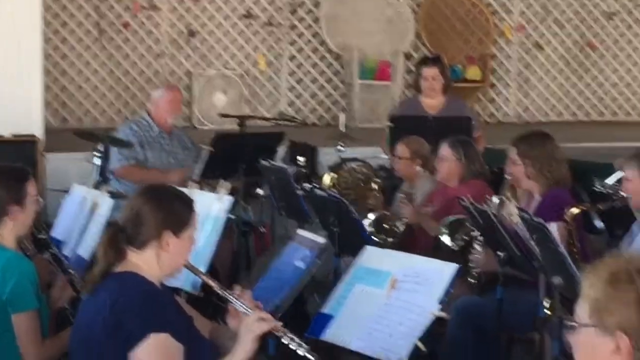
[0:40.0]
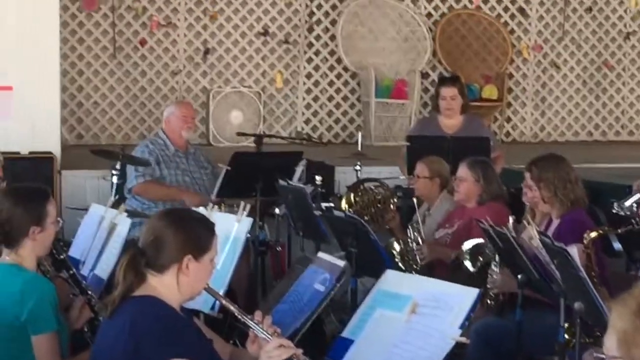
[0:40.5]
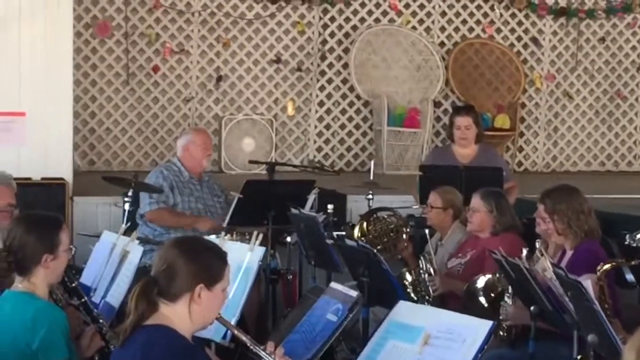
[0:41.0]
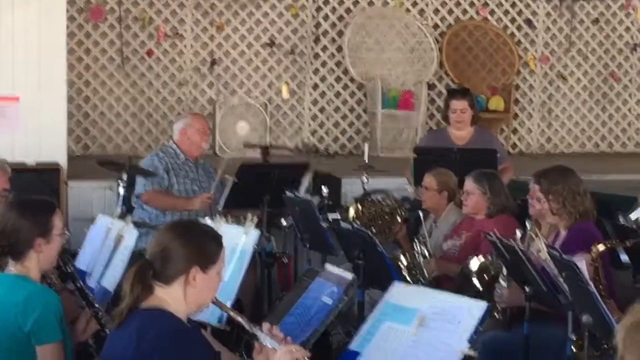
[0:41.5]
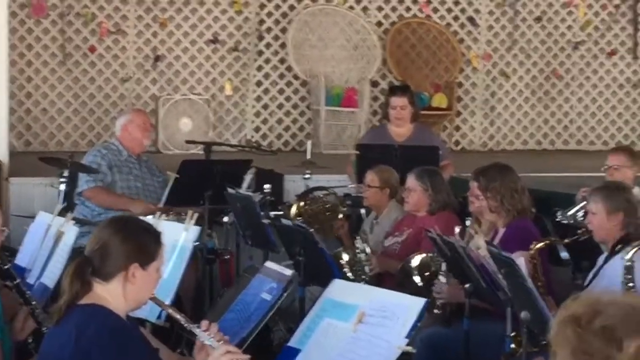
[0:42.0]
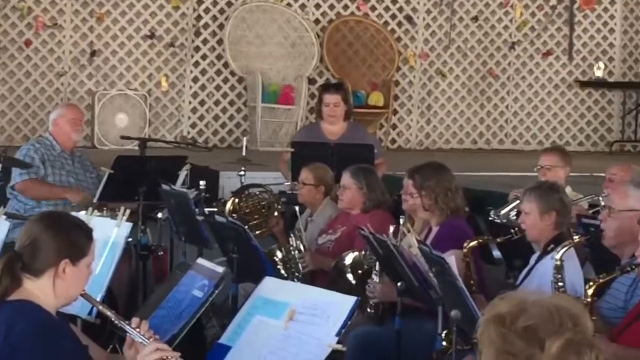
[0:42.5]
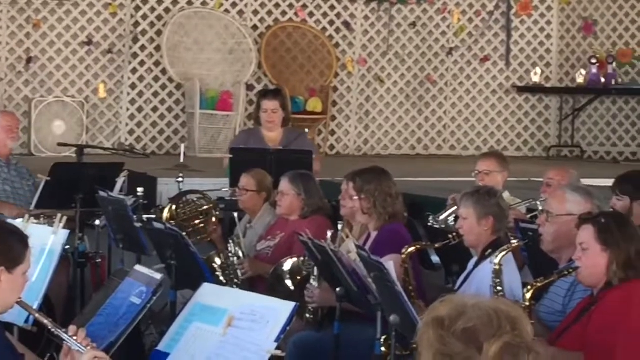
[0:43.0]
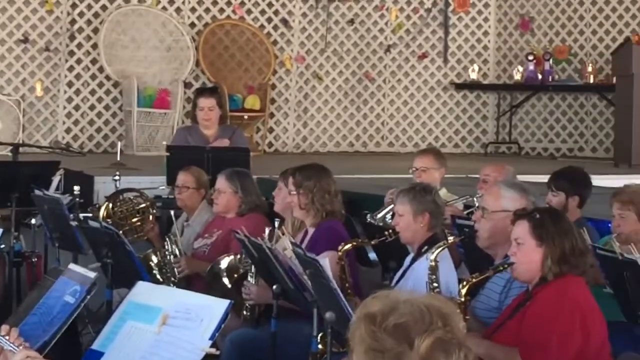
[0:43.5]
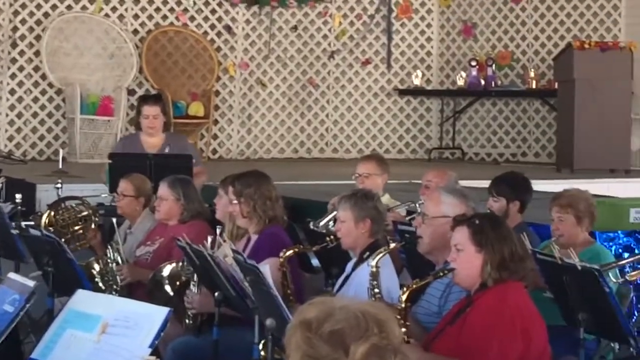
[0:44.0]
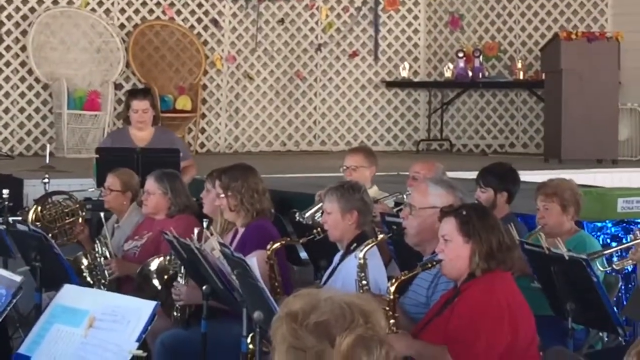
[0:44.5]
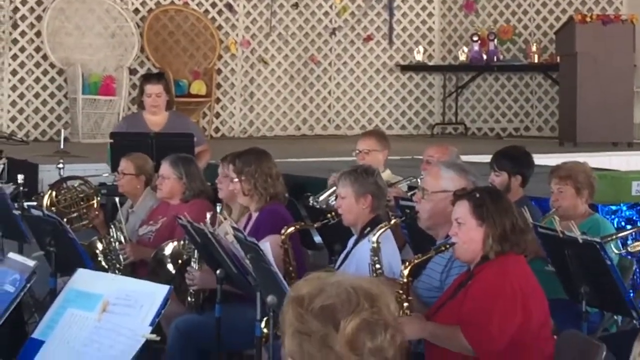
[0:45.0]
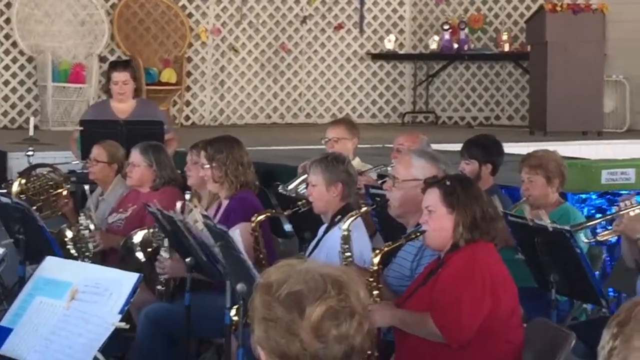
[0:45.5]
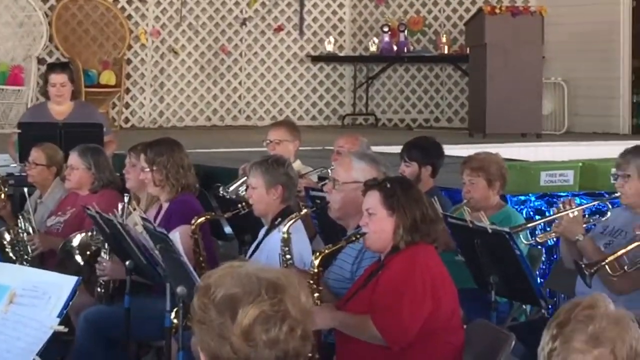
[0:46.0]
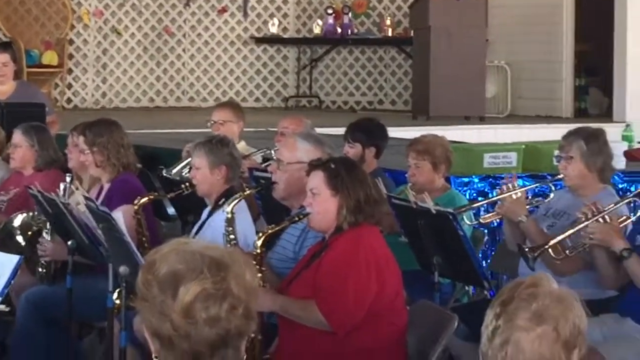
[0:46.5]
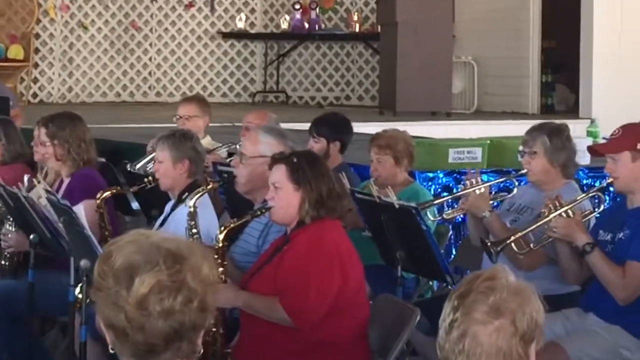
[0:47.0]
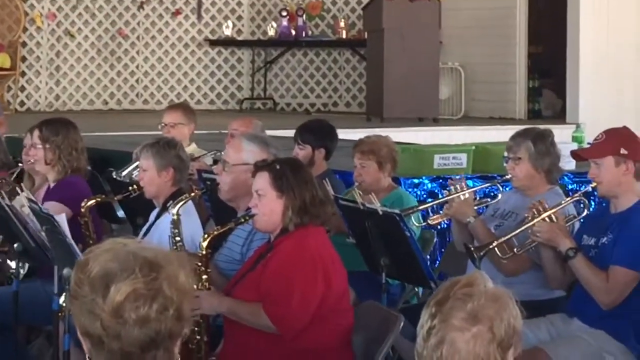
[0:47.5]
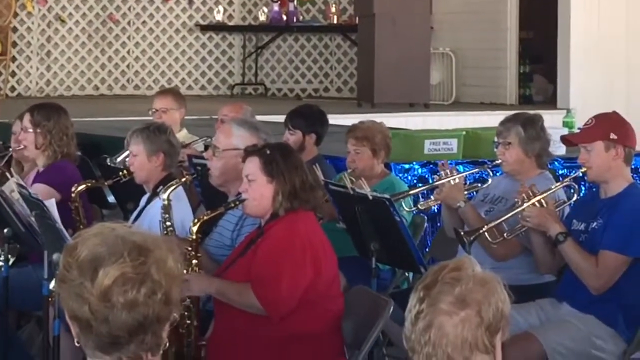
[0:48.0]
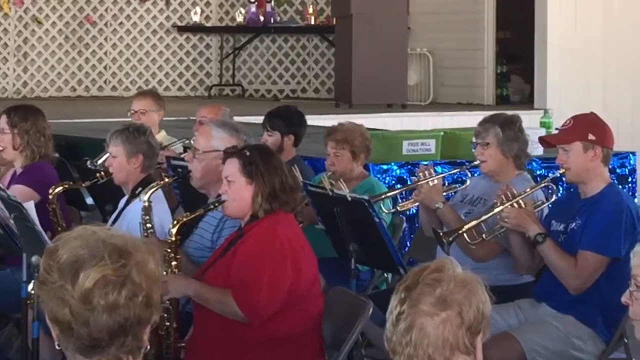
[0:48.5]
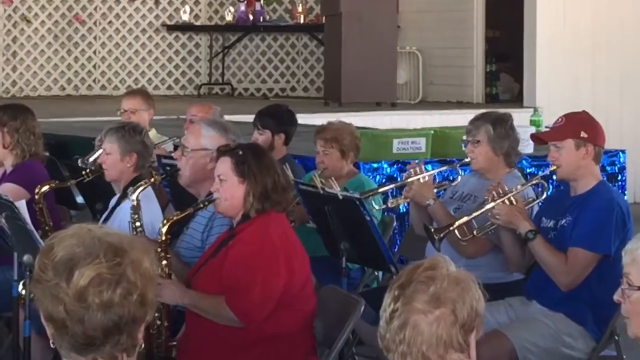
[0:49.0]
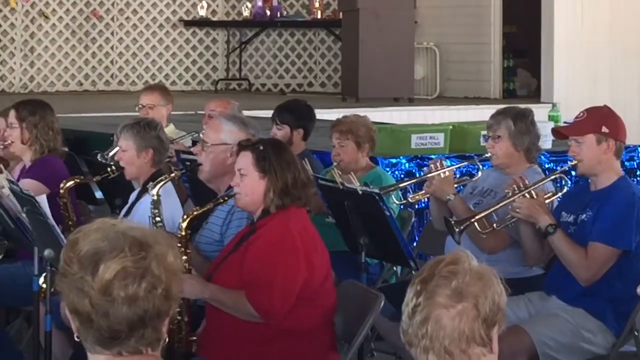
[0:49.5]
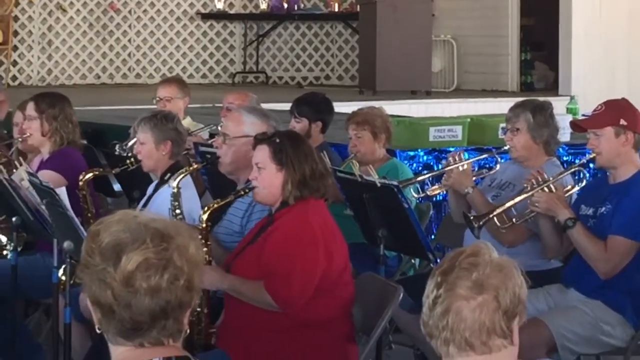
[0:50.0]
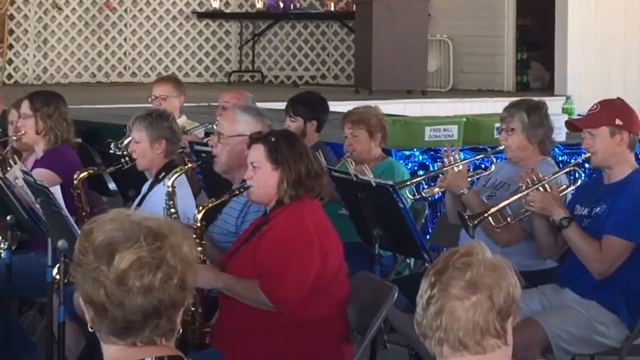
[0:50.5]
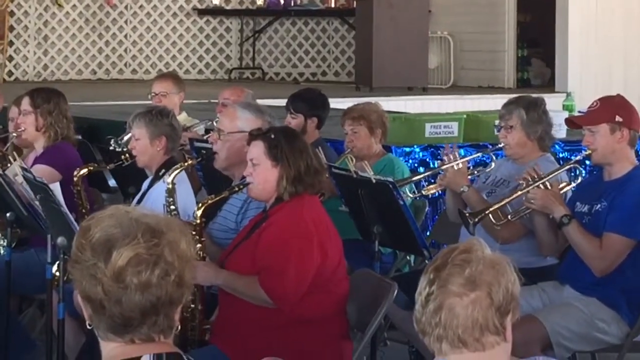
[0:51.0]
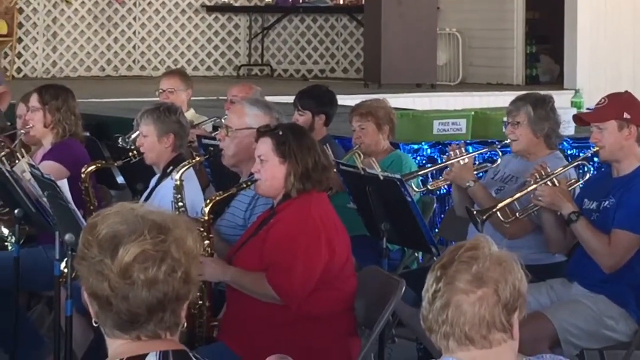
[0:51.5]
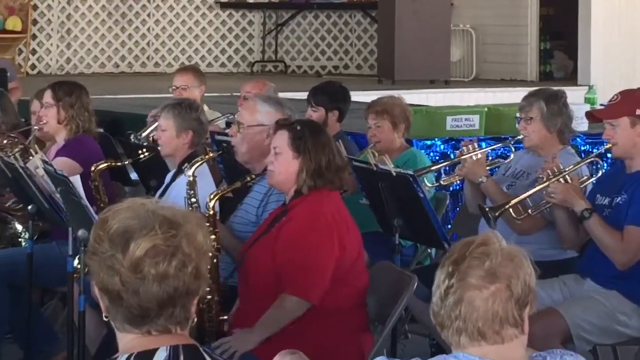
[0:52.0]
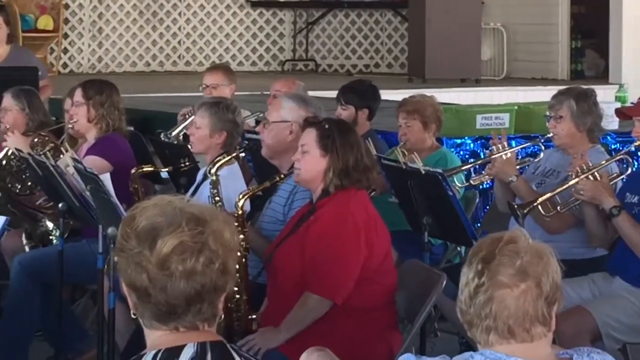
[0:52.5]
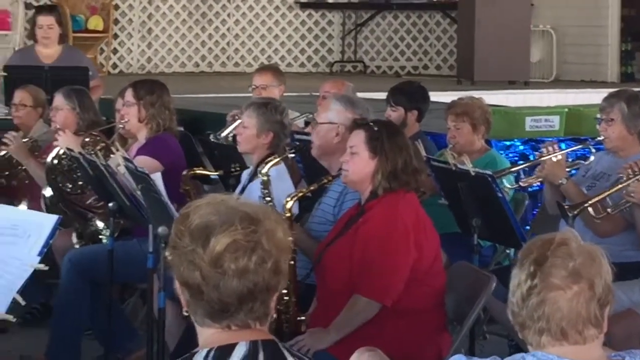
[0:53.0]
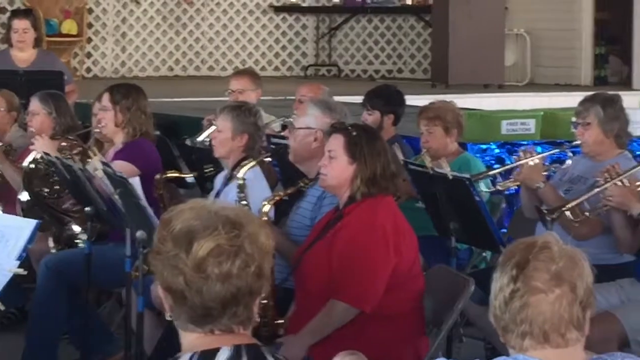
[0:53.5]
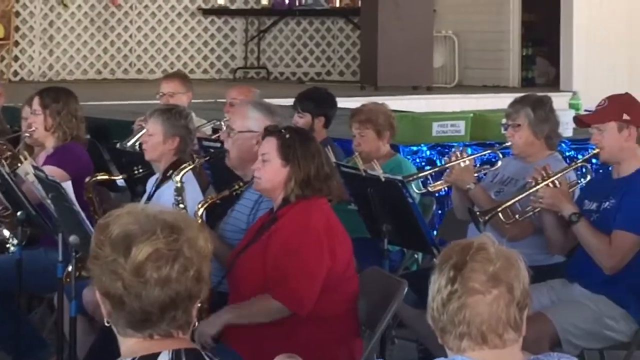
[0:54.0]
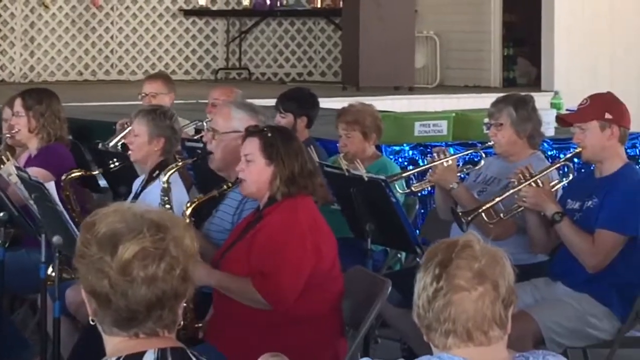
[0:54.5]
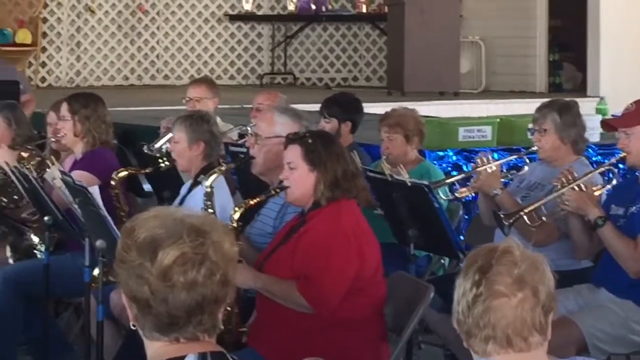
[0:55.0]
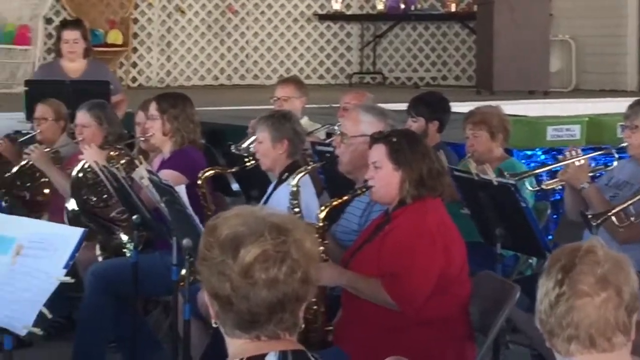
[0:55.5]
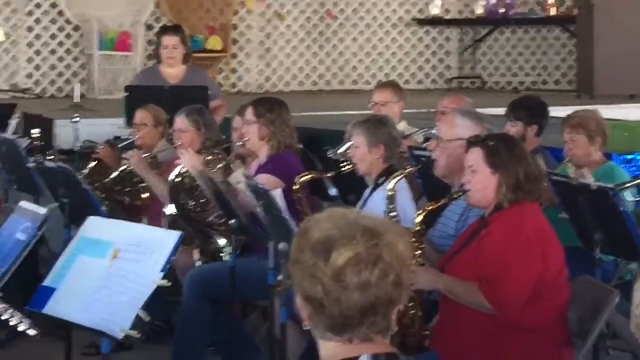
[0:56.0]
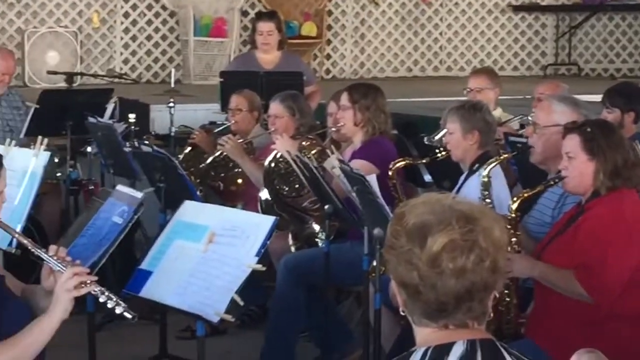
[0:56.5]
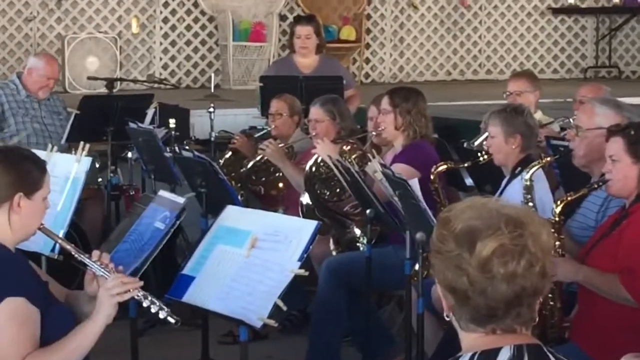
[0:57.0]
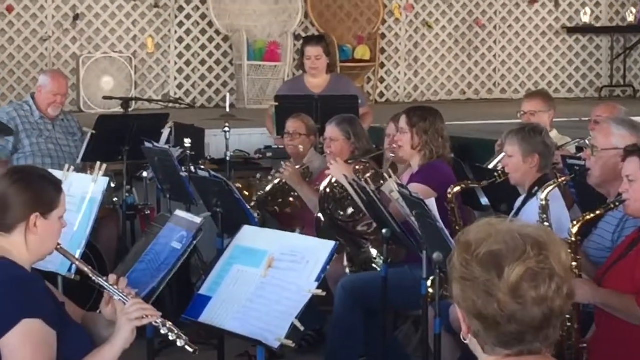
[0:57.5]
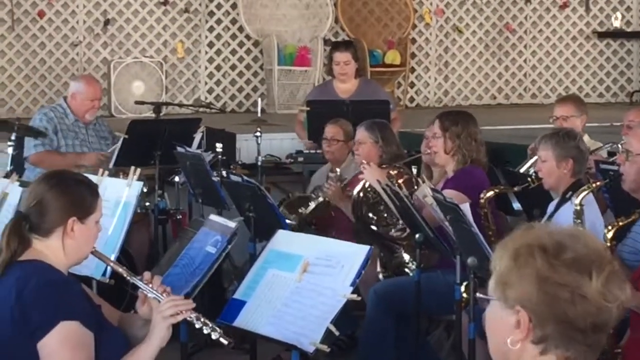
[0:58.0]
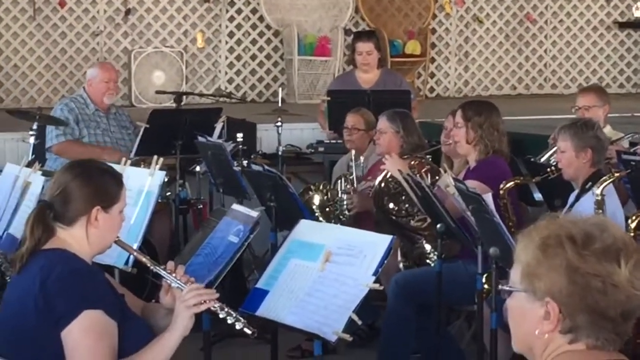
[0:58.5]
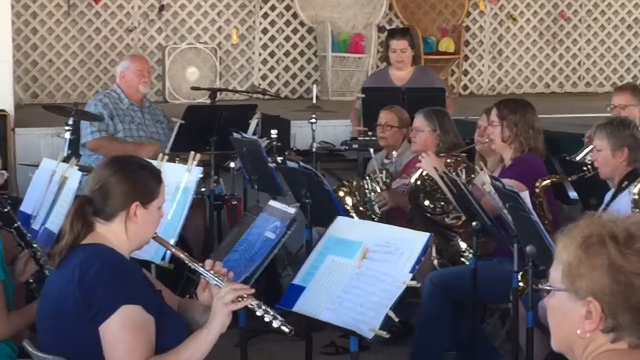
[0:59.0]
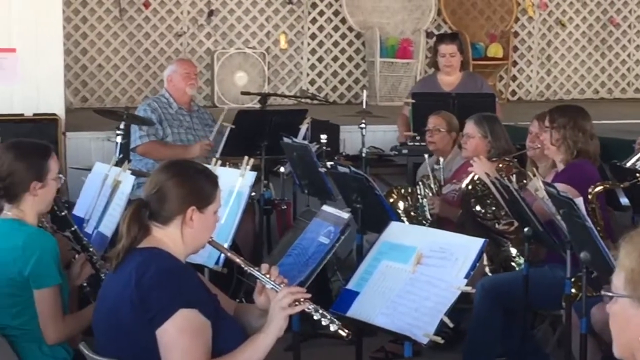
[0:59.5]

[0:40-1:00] The musicians are playing music. The man in the checked shirt is a percussionist, banging on a drum that cannot be seen. A fan on the stage is blowing on him; he is a slightly heavy person. Band members hold their instruments to their mouths, including saxophones, trumpets and piccolos. The woman at the podium is not actually conducting, but simply following along with the music. The players appear to be well into their 20s, up to their 40s.